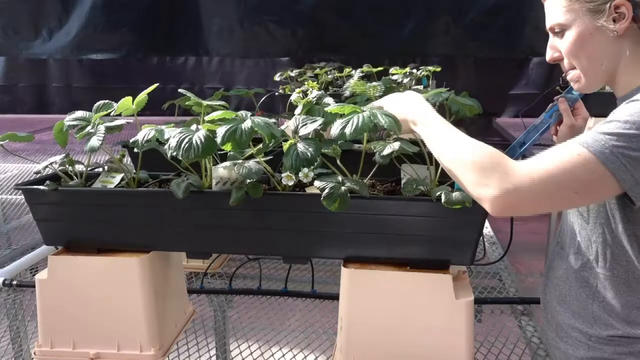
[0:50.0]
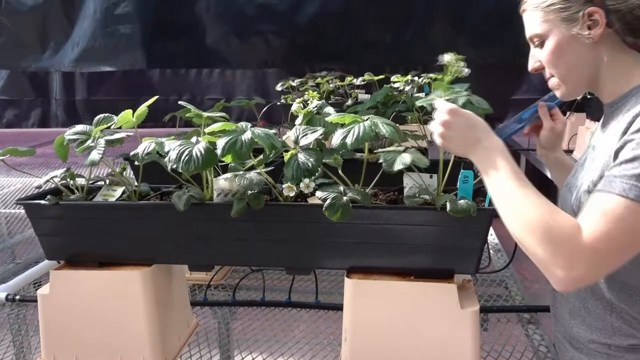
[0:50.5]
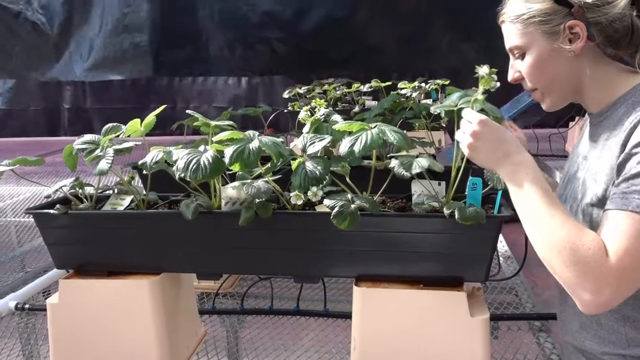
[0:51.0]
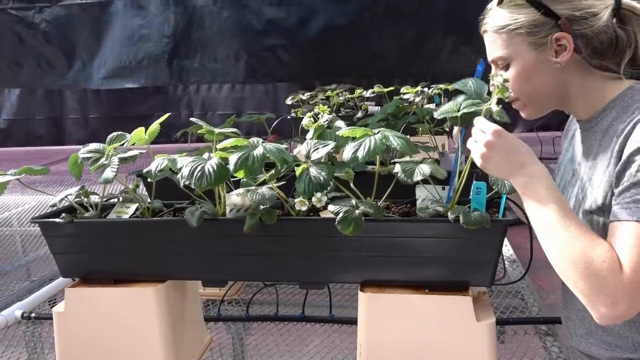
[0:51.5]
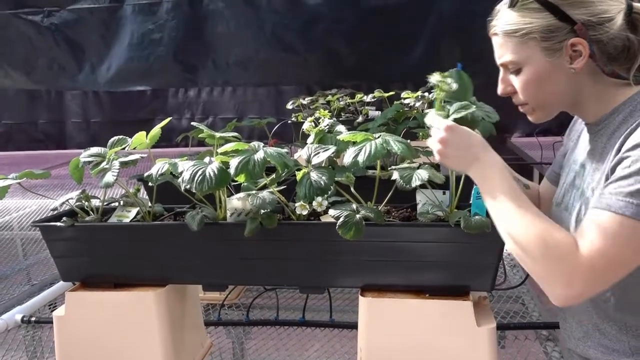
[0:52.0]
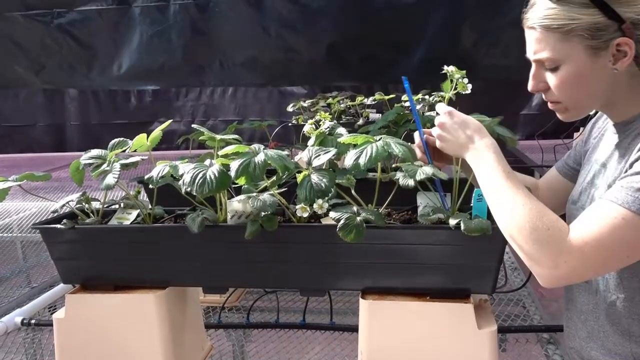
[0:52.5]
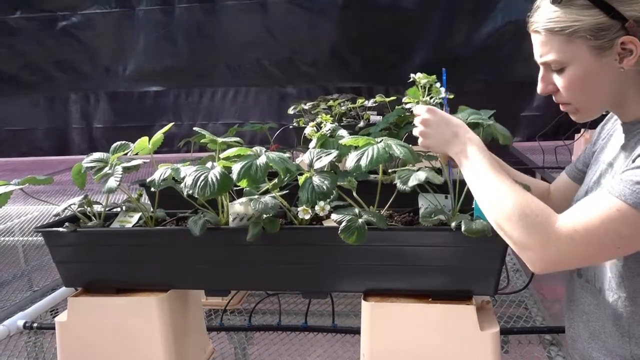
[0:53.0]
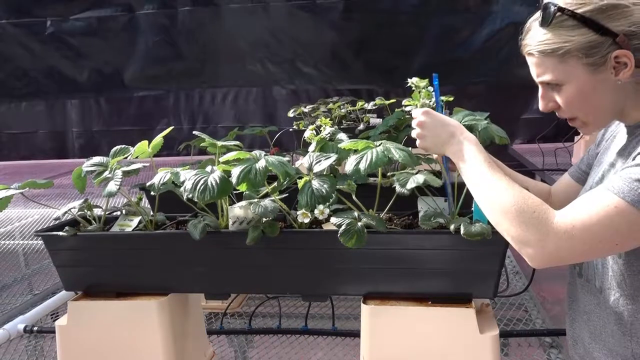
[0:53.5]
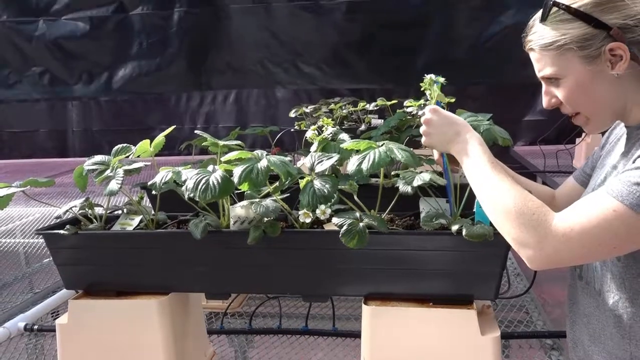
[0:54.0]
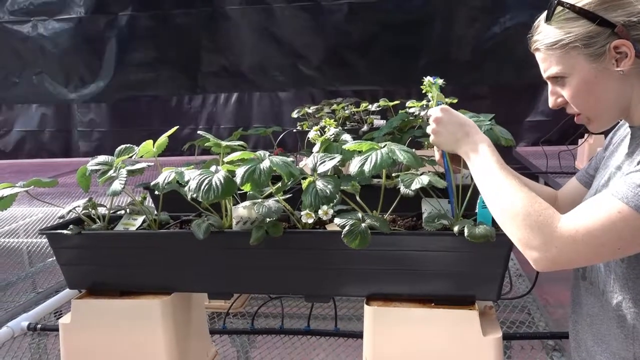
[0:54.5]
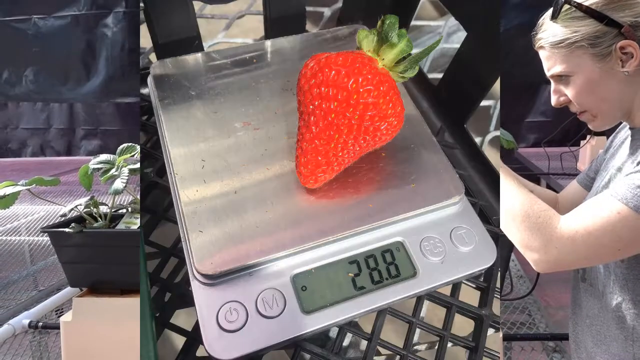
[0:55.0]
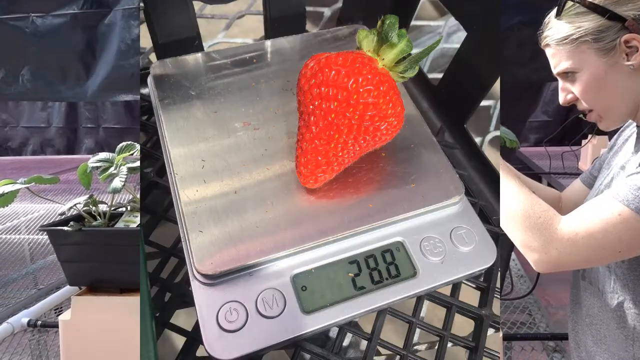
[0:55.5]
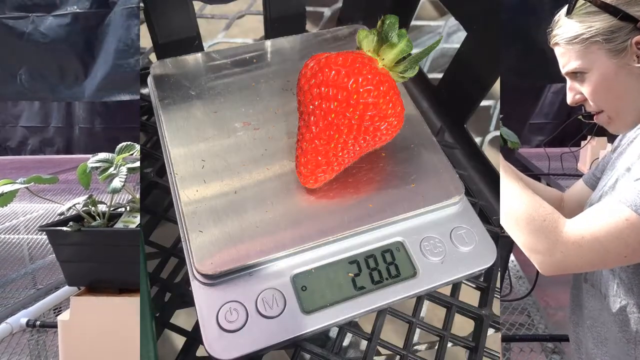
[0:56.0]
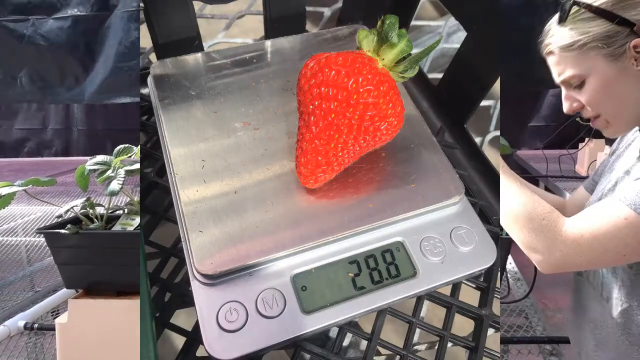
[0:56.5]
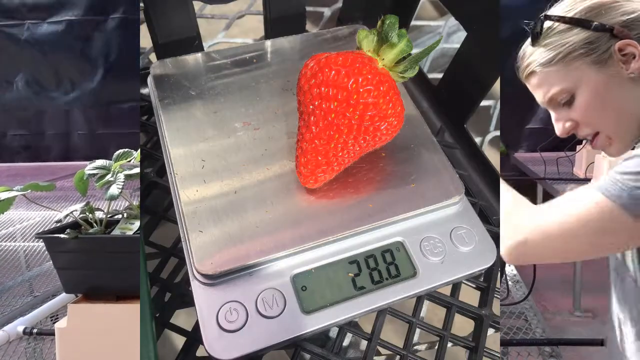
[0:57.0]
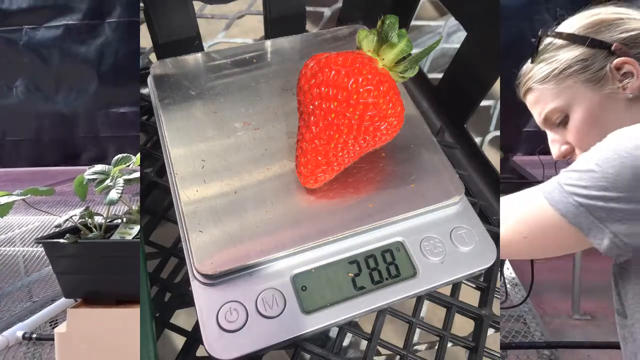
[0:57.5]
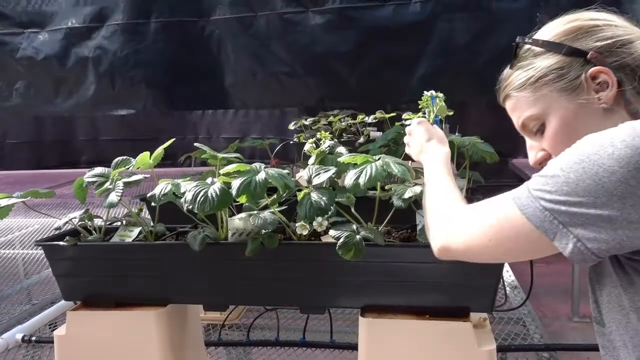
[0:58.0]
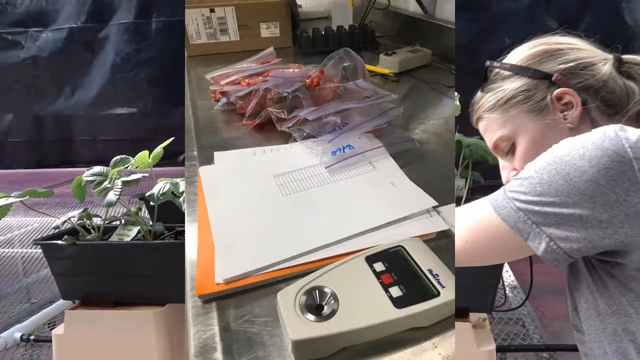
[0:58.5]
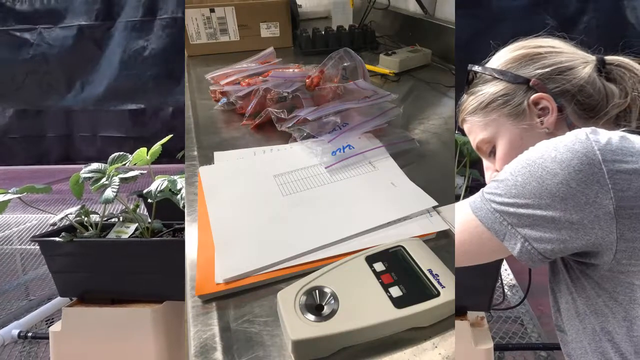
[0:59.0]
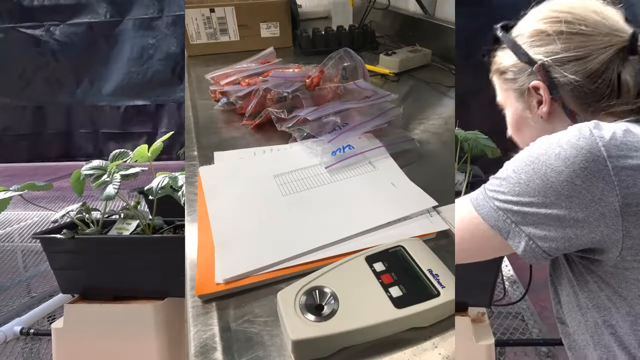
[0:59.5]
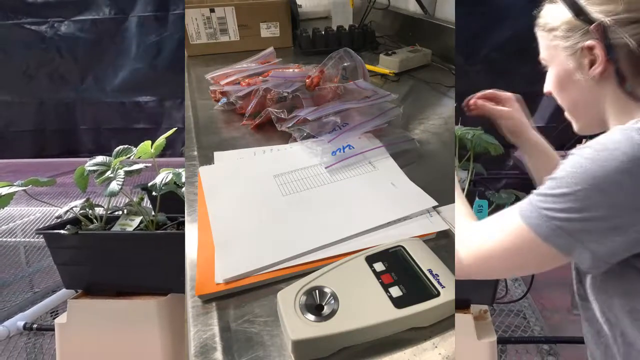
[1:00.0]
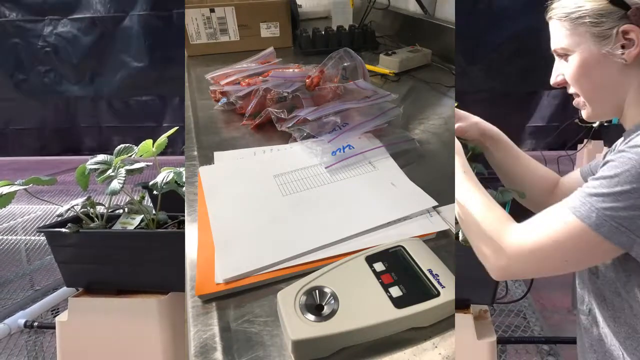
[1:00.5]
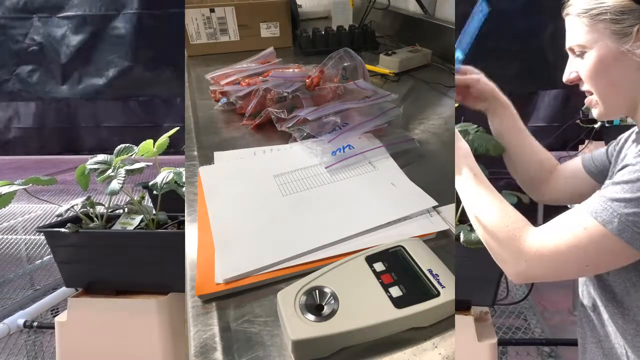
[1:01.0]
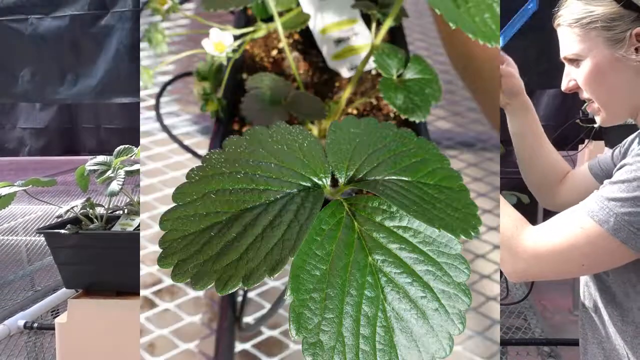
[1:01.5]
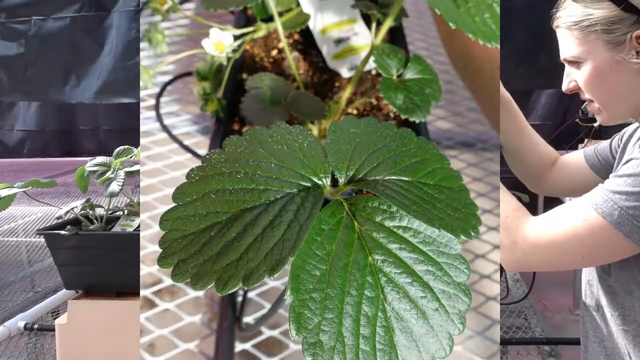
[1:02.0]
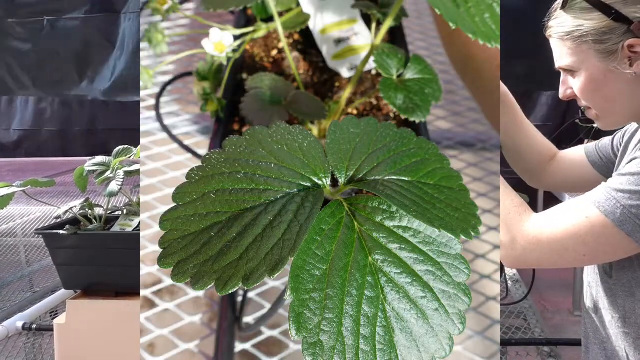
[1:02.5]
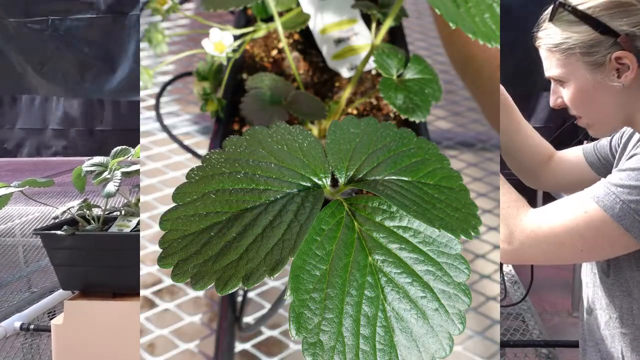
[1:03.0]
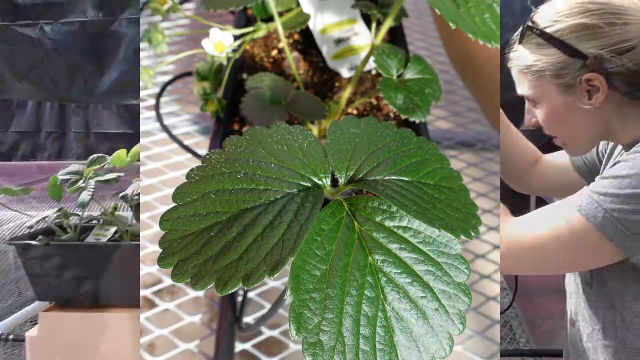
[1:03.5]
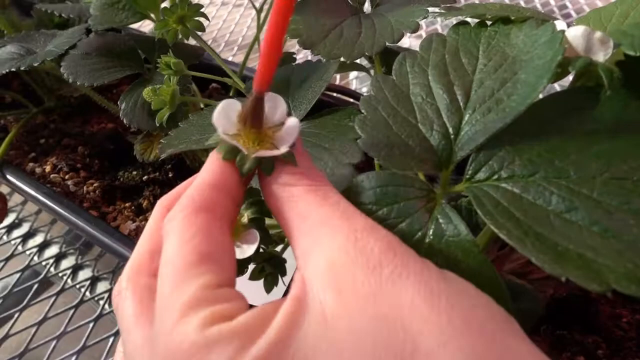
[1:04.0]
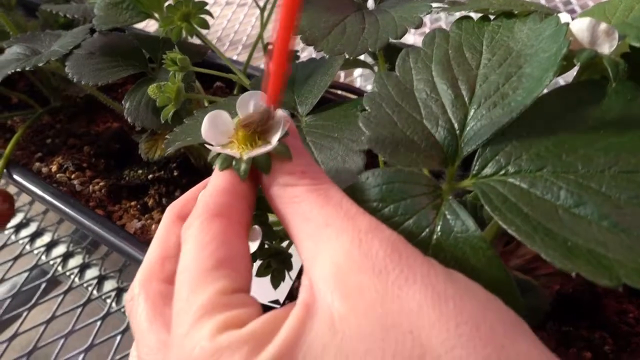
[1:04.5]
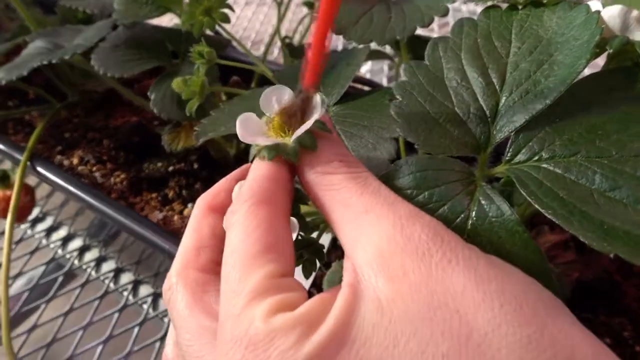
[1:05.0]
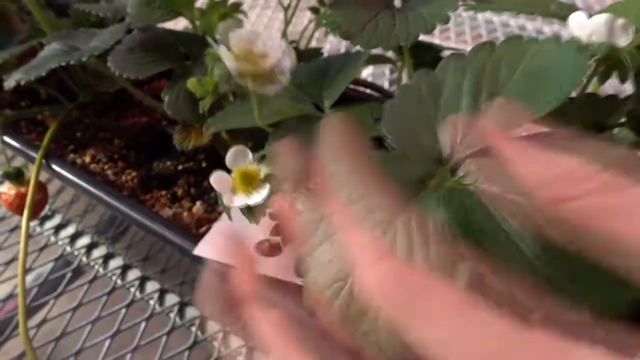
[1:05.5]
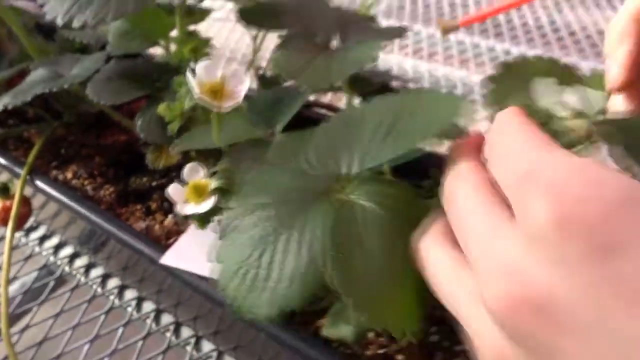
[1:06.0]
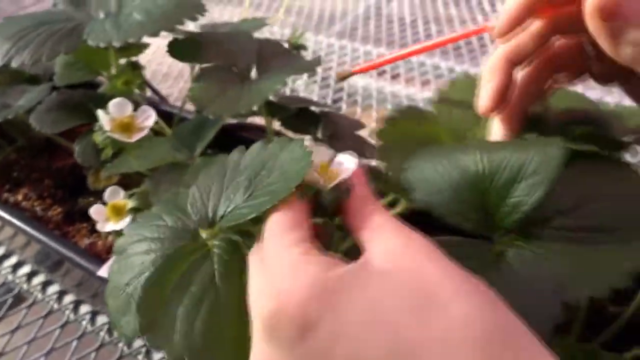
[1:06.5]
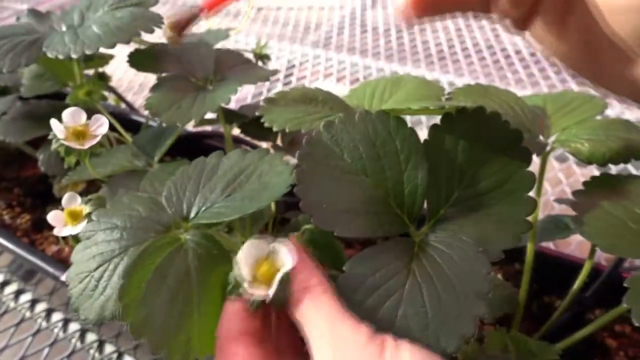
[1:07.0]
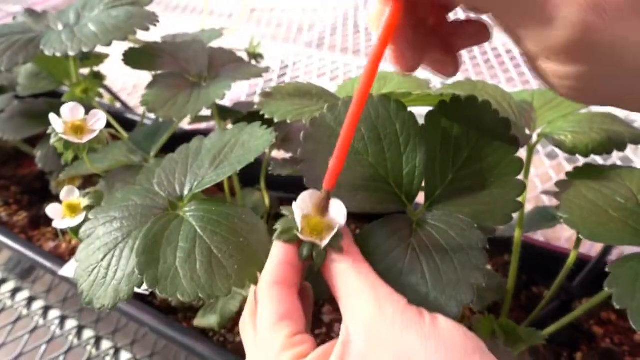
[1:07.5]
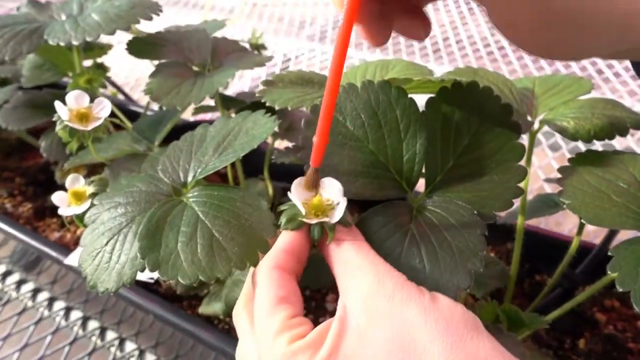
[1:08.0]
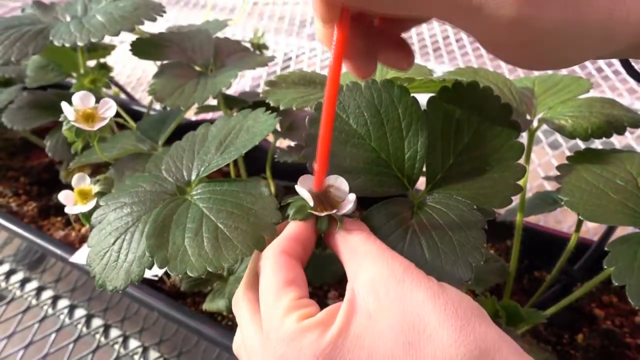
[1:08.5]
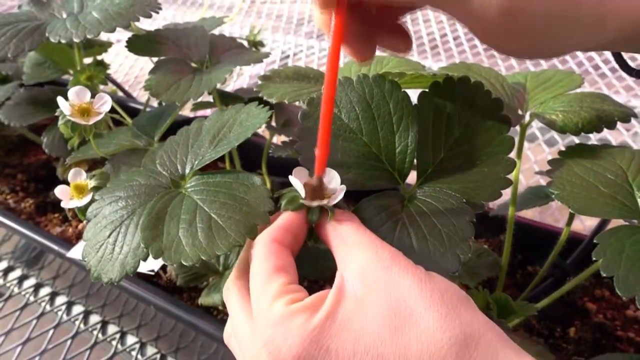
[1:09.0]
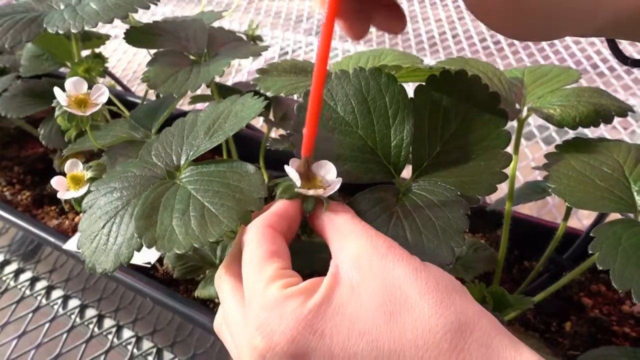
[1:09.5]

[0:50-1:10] A woman on the right places some sort of thin purple object into one of the planter boxes in front of her, with the planter box on the left. An image of a scale weighing a strawberry appears while the woman moves around on the right side. Another image in the middle shows a paper, small stacks of paper and Ziploc bags with strawberries, with the woman still moving around on the right. Next, an image in the center shows a green leaf coming from a planter box, right in front of the camera. A very close-up view then shows a brush brushing one of the flowers in the planter box, and the woman's hands grab another flower to the right, a small white flower. She holds the flower with one hand and brushes its middle part with a red paintbrush in the other.